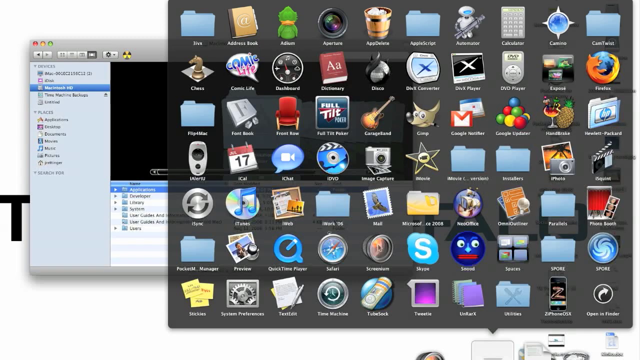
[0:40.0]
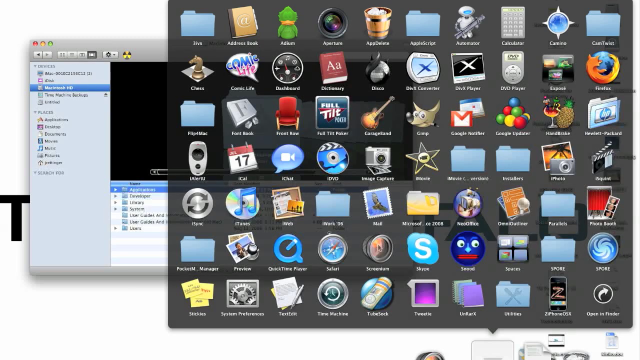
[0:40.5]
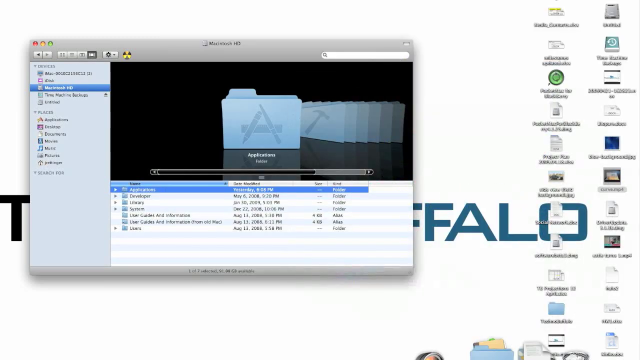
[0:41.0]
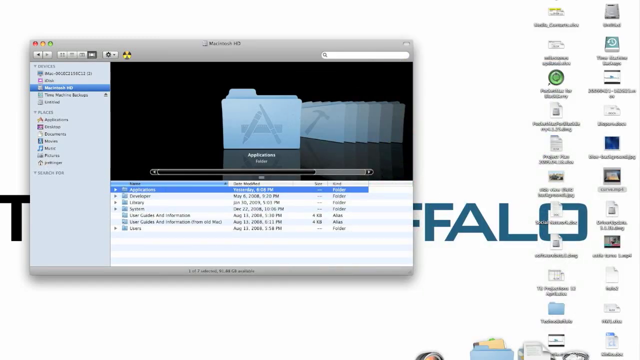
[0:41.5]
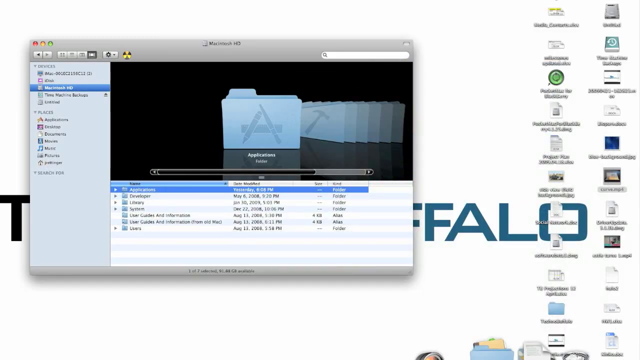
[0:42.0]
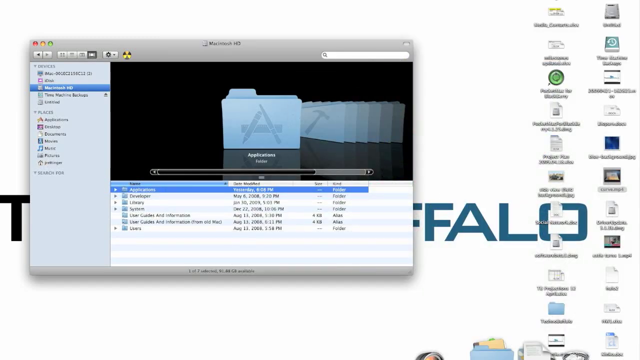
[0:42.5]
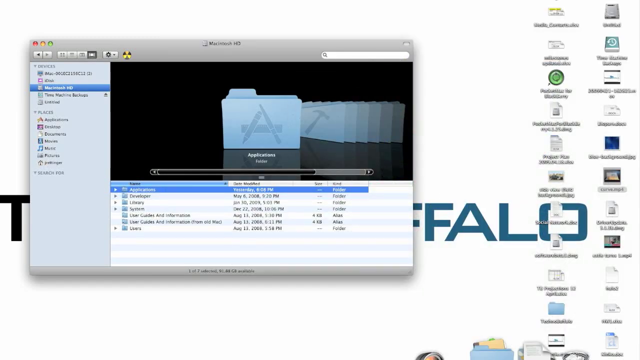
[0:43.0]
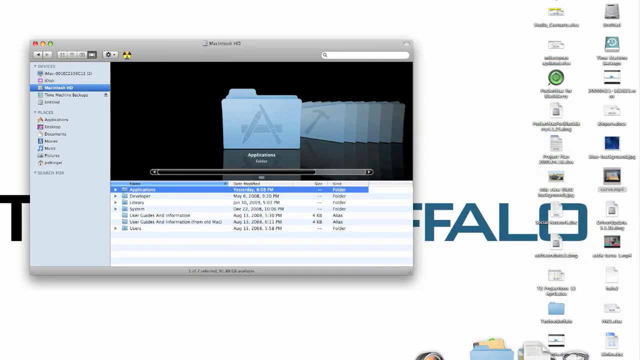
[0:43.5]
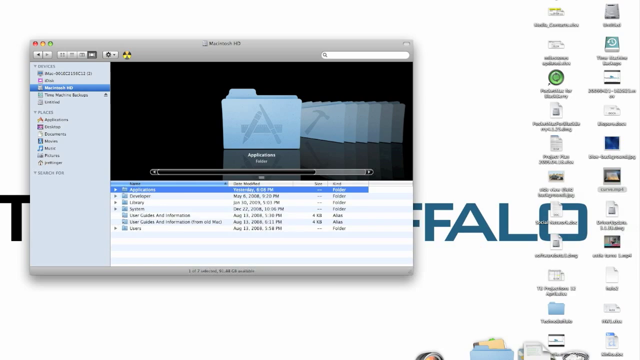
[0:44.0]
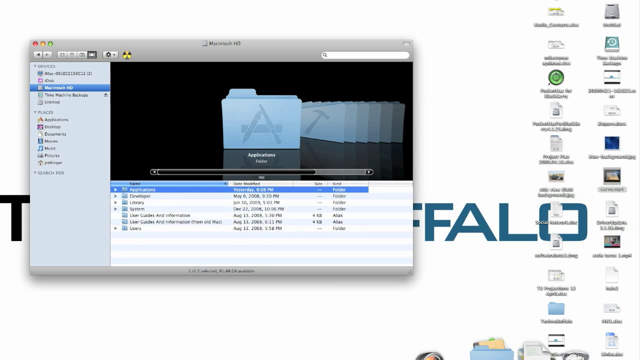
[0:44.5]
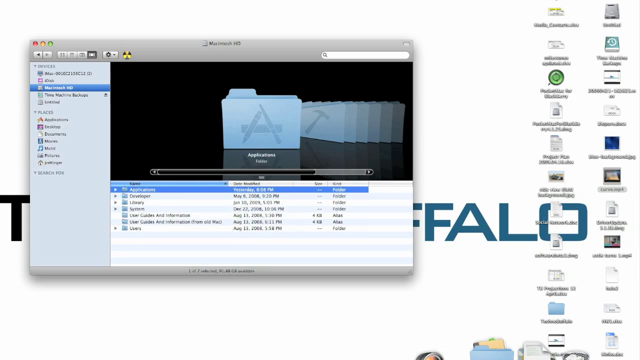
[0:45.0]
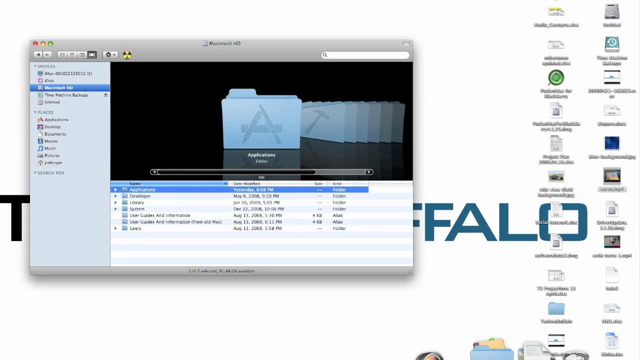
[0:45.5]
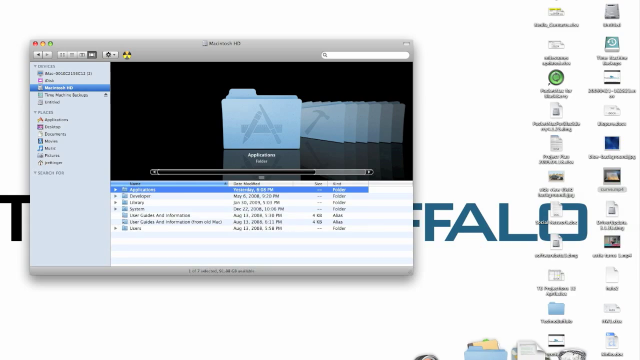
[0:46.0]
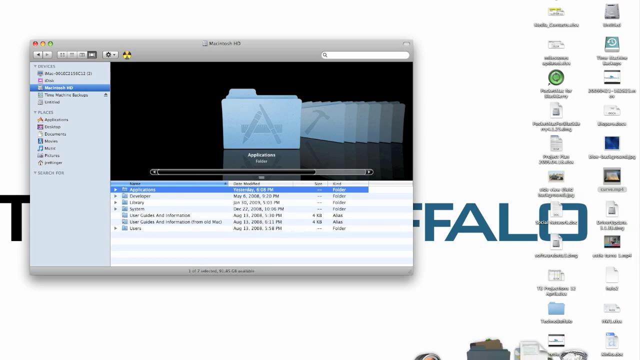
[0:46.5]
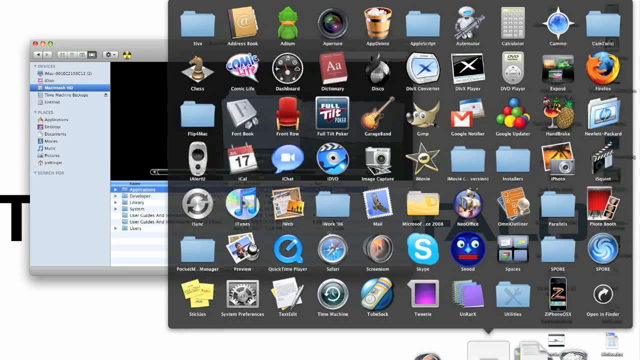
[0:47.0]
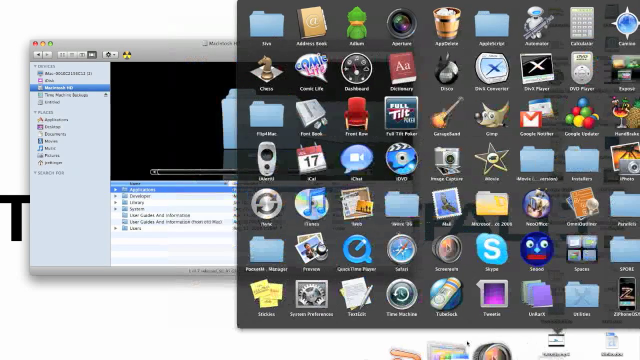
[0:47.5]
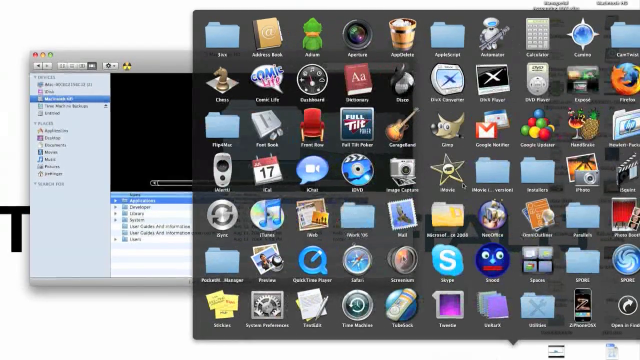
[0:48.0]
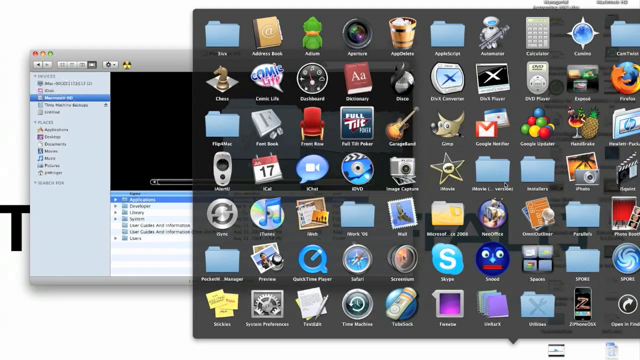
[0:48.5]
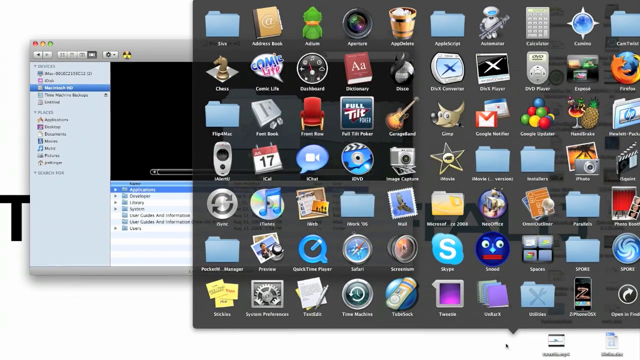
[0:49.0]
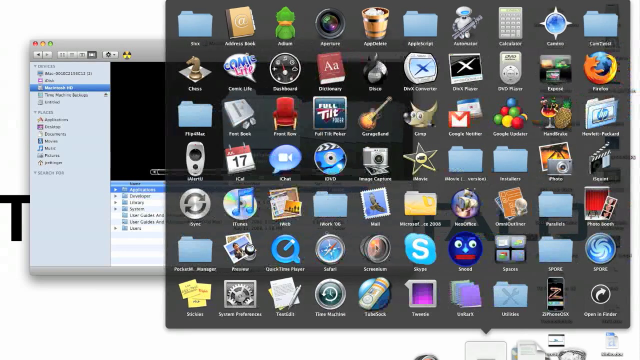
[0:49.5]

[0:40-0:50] The window with many items is open; among them are something like a frog, what looks like a guitar, a star and a camera. It may be a Mac computer. Firefox, GarageBand, a clock and a calendar are recognizable among the items. Another folder pops up in the recording window, and he clicks on the folder with the different items again. He keeps doing the same thing over and over and does not seem to click on anything inside that folder; he appears to be showing the apps he has on his computer.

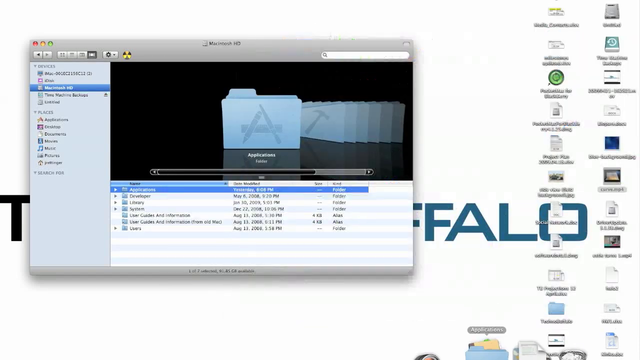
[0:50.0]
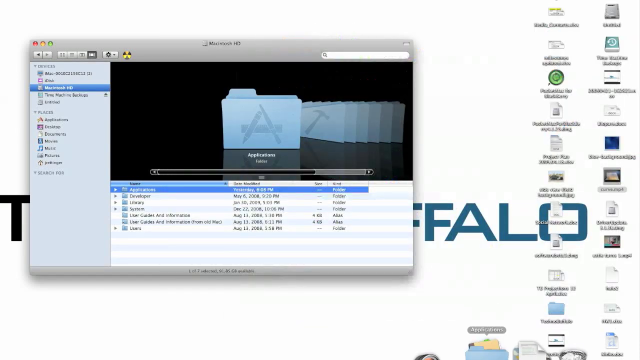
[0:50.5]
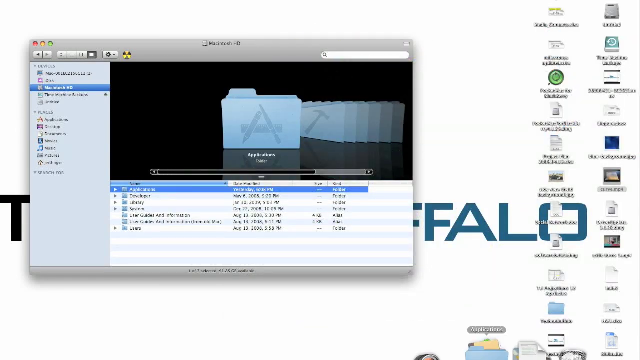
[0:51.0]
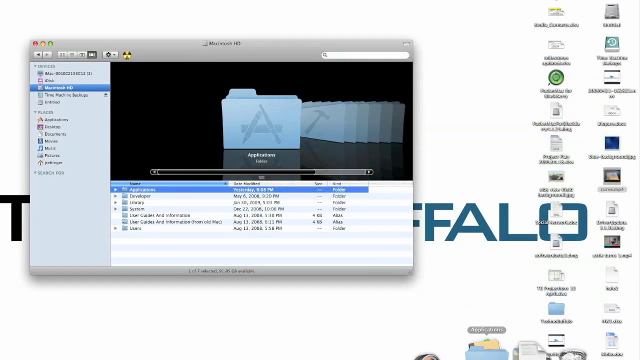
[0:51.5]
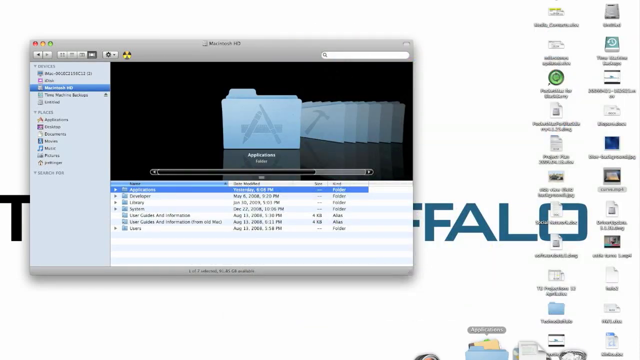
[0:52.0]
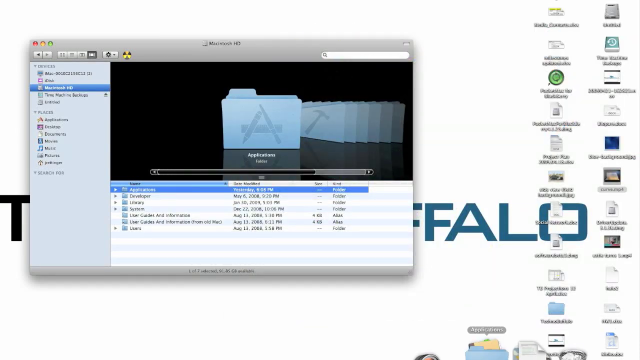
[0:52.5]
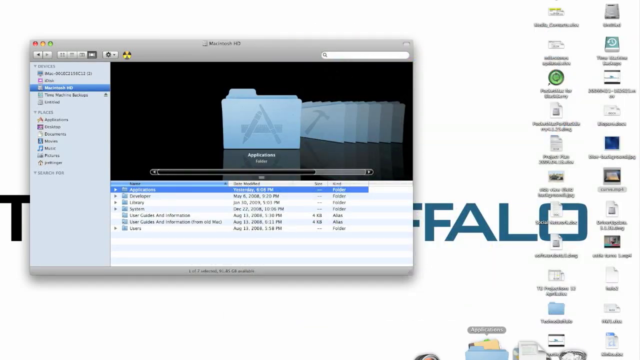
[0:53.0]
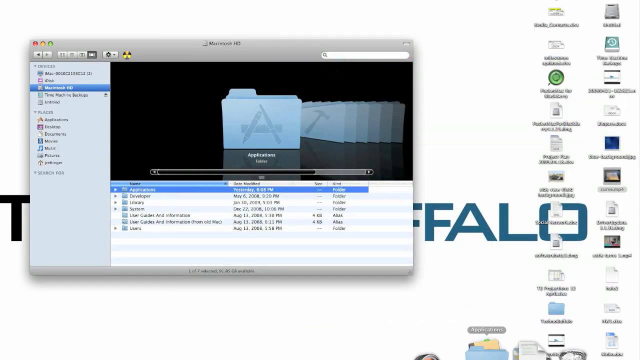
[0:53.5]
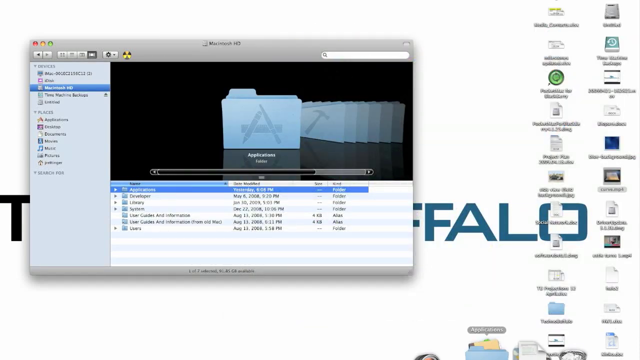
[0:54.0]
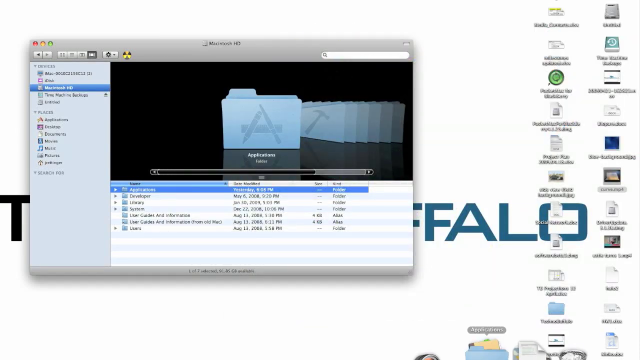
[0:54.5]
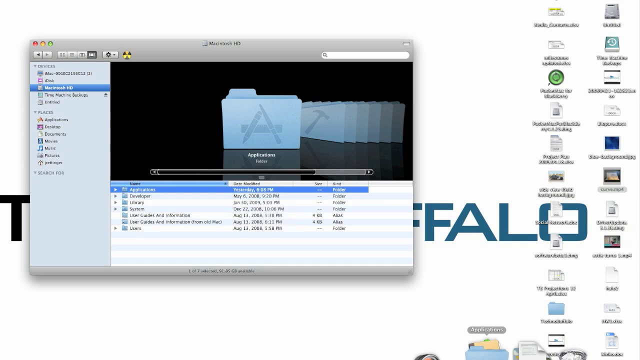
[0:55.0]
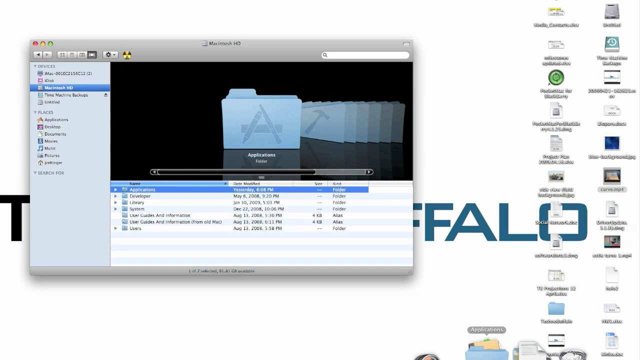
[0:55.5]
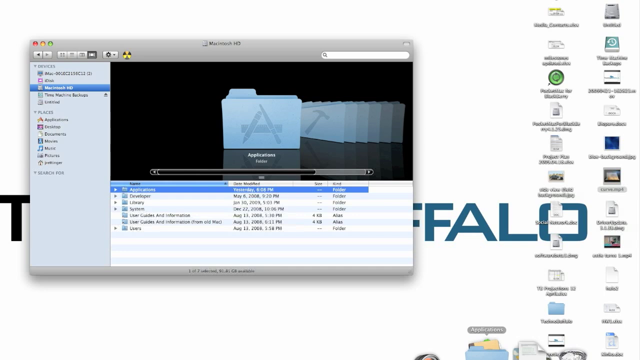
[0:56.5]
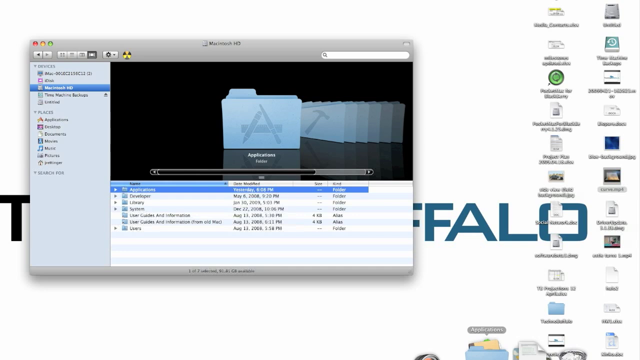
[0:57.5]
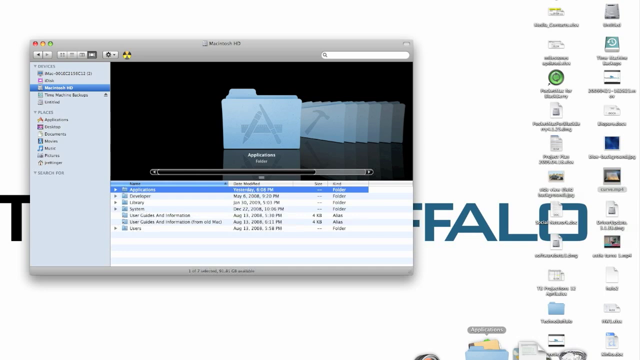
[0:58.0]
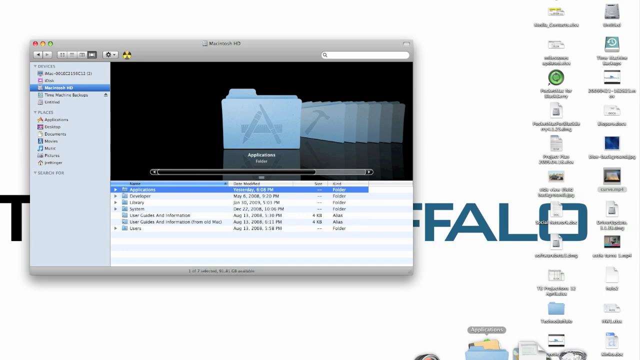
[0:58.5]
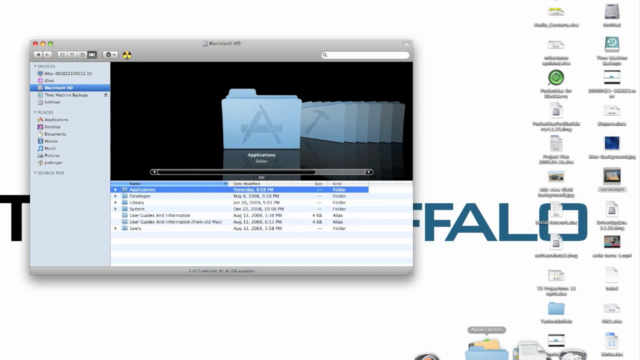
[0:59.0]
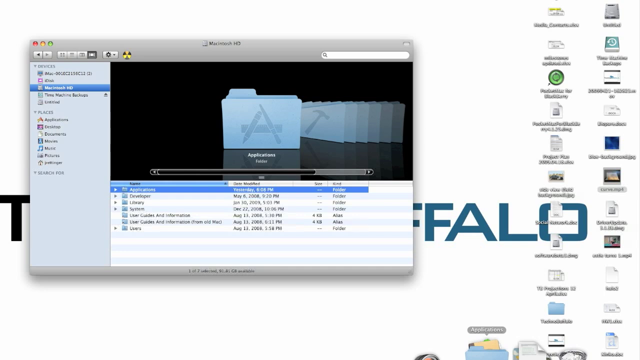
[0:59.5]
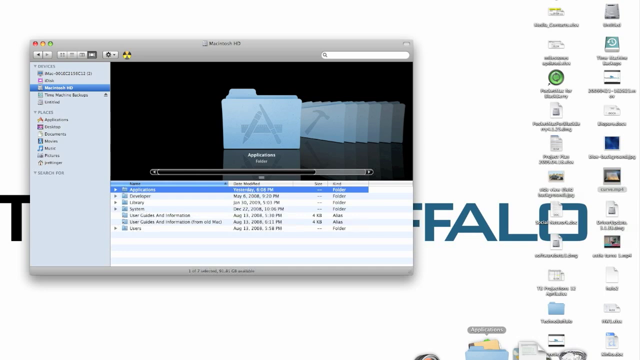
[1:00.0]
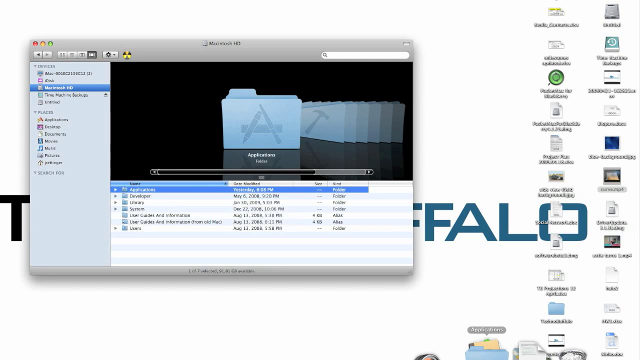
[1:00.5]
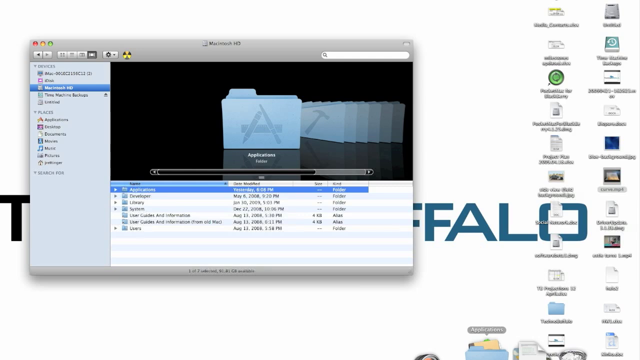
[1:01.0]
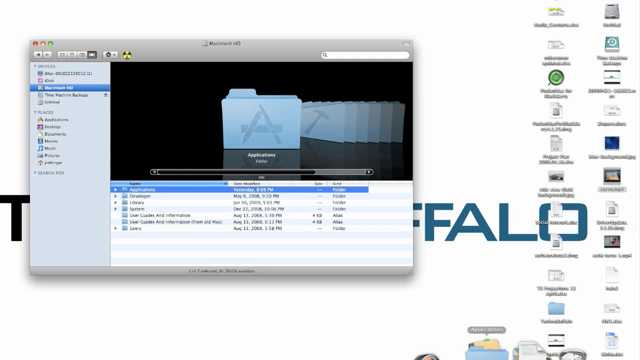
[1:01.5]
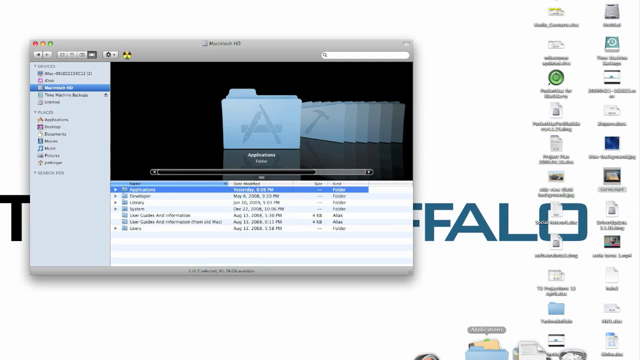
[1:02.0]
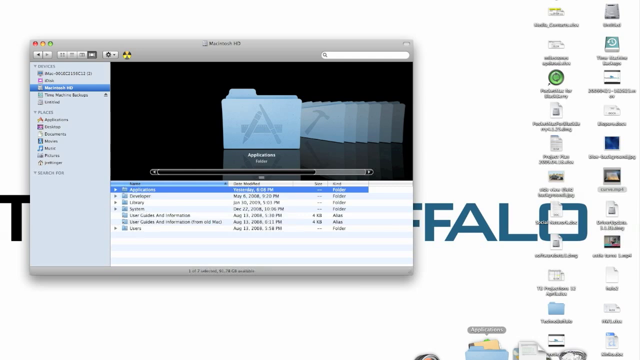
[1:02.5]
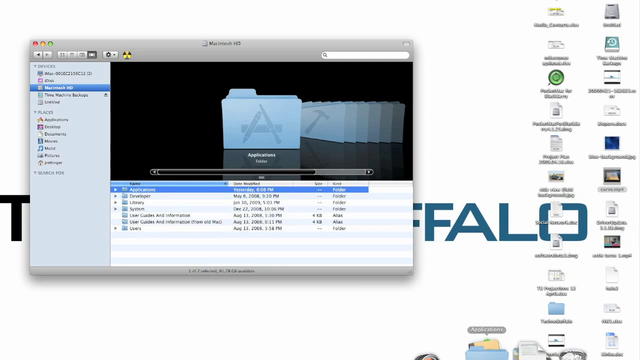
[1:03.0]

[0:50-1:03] The screen shows someone's computer with a folder window open over the desktop. The folder contains many folders, and some items are highlighted in blue. Nothing else happens.